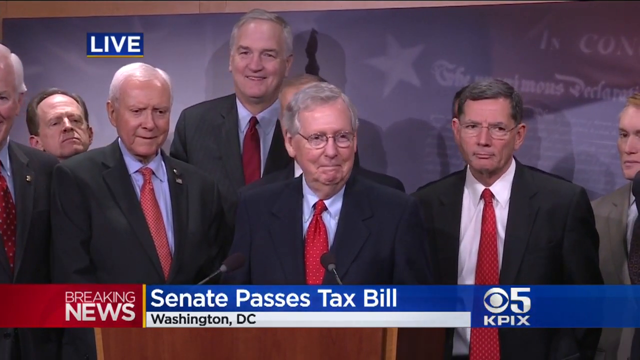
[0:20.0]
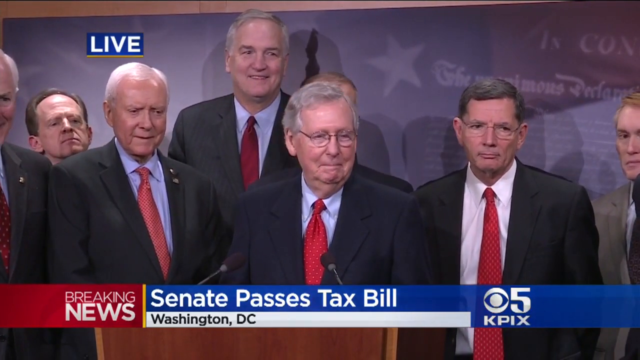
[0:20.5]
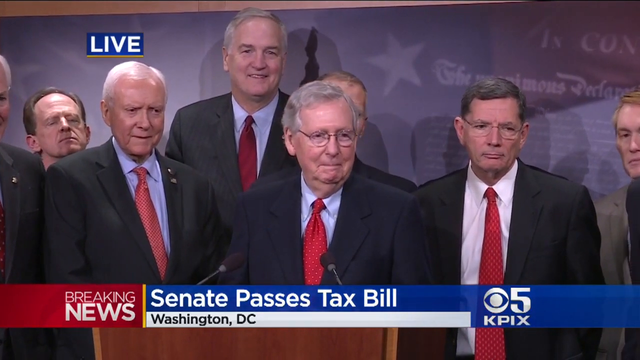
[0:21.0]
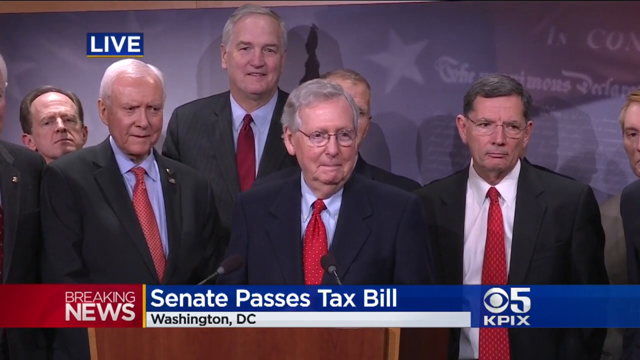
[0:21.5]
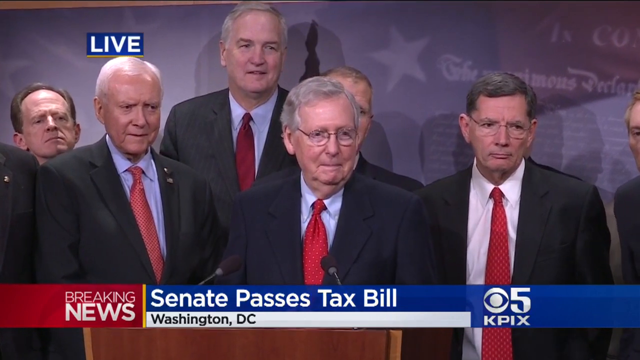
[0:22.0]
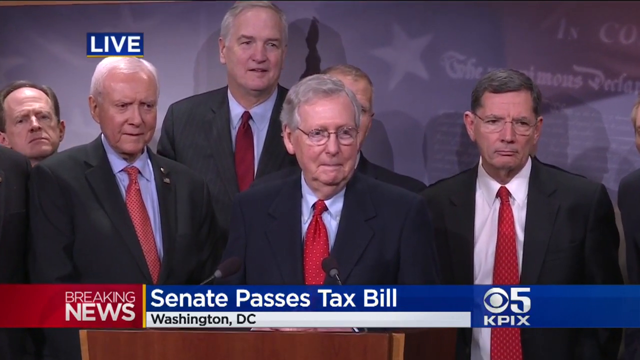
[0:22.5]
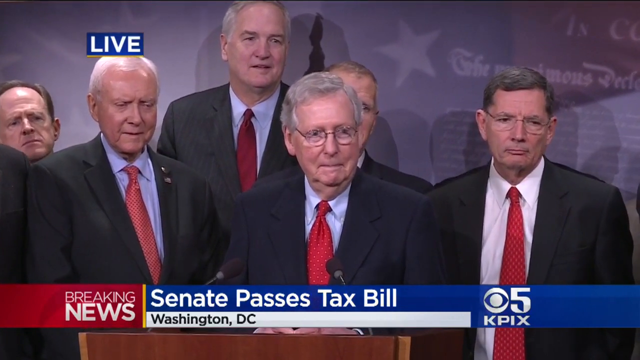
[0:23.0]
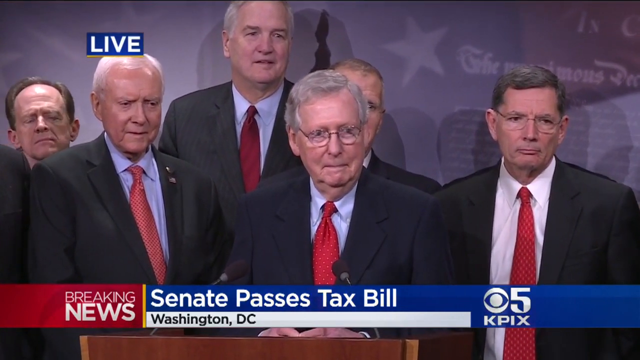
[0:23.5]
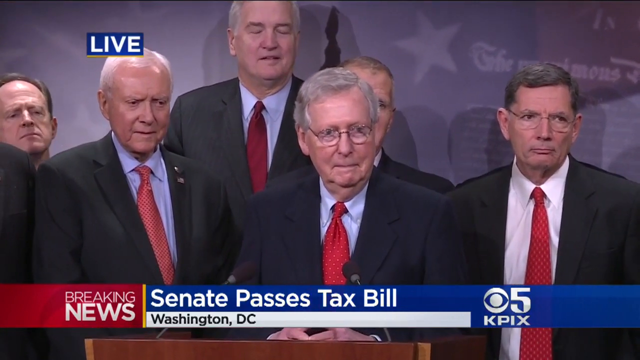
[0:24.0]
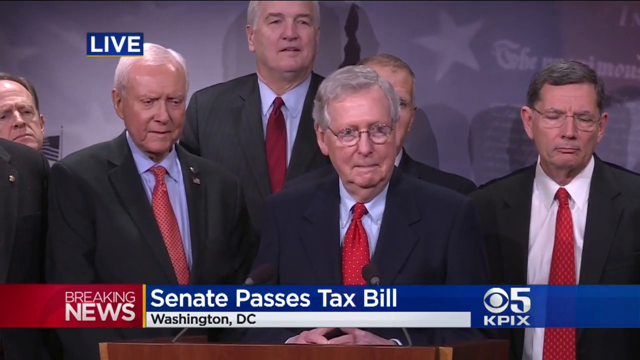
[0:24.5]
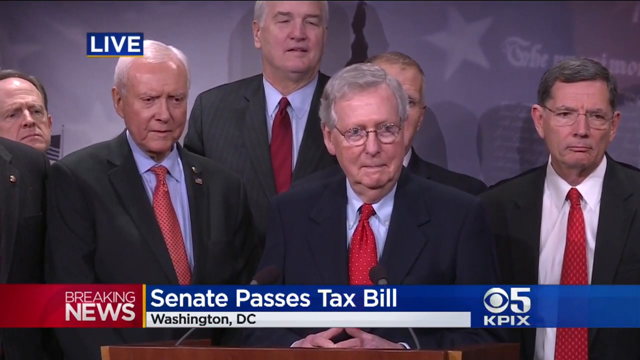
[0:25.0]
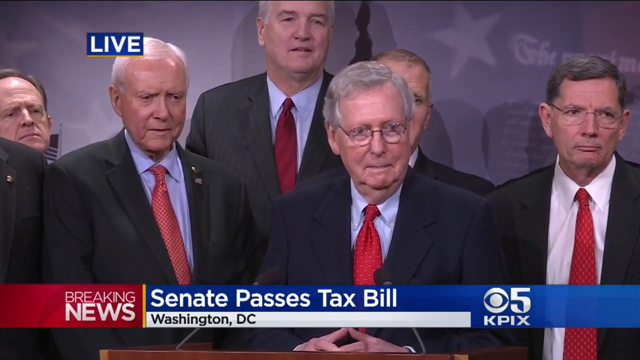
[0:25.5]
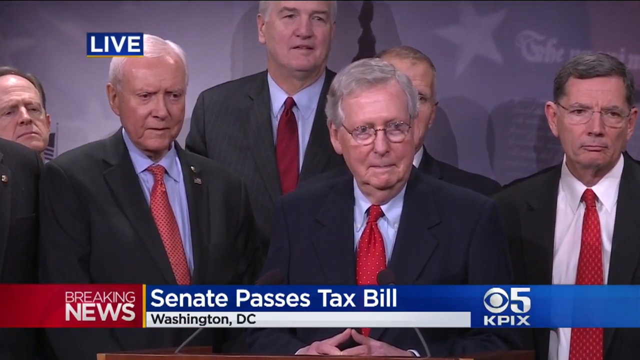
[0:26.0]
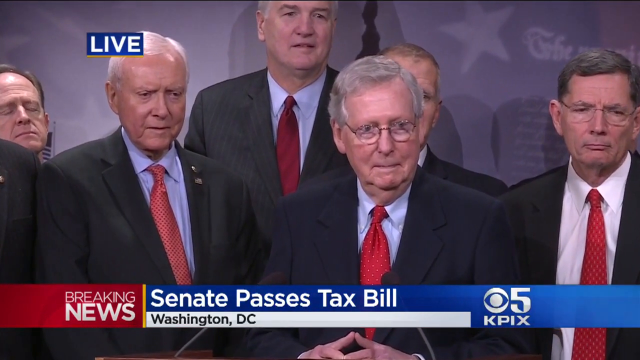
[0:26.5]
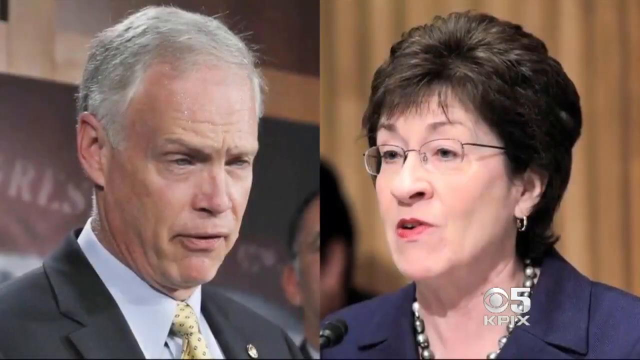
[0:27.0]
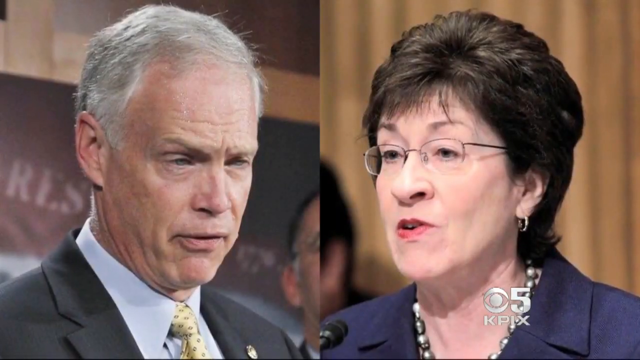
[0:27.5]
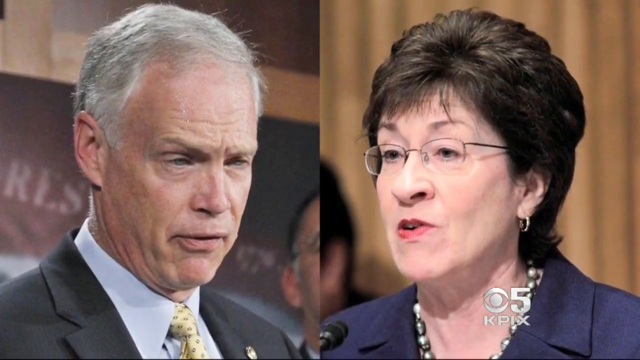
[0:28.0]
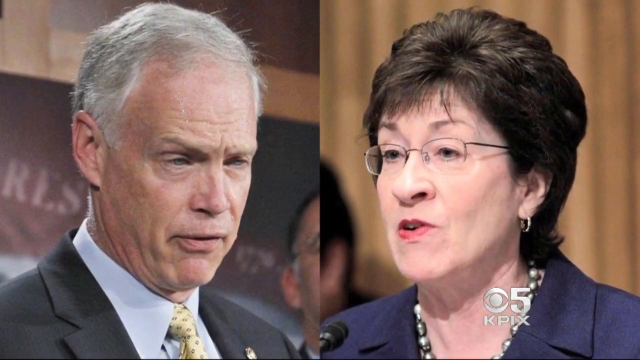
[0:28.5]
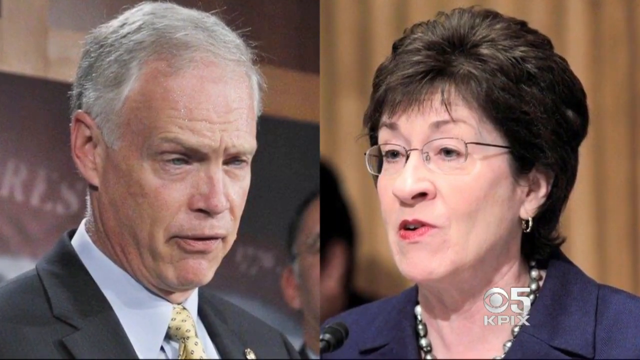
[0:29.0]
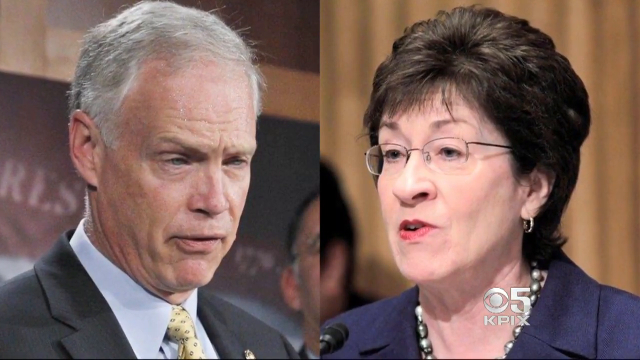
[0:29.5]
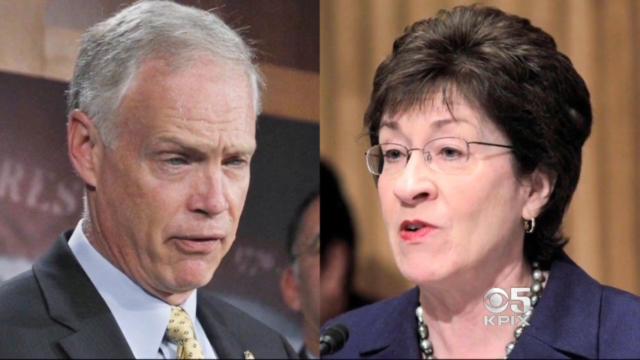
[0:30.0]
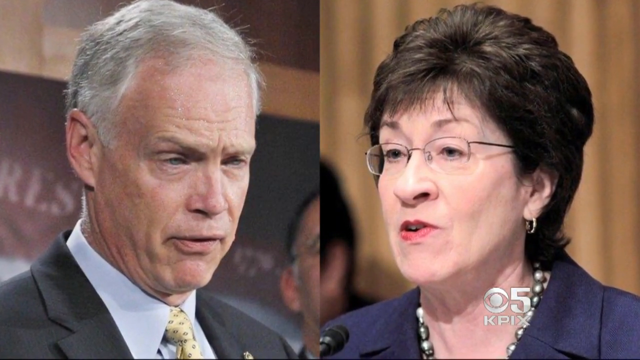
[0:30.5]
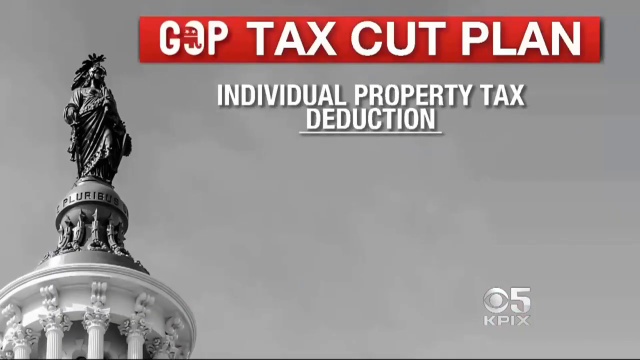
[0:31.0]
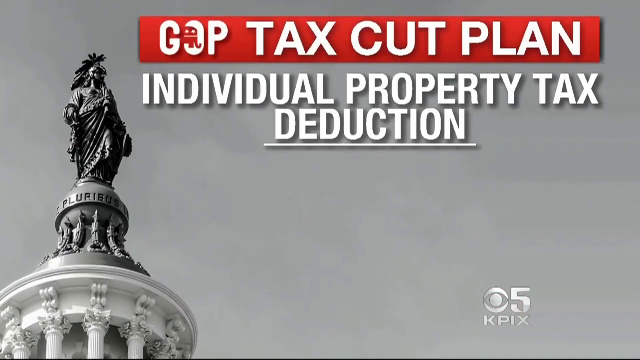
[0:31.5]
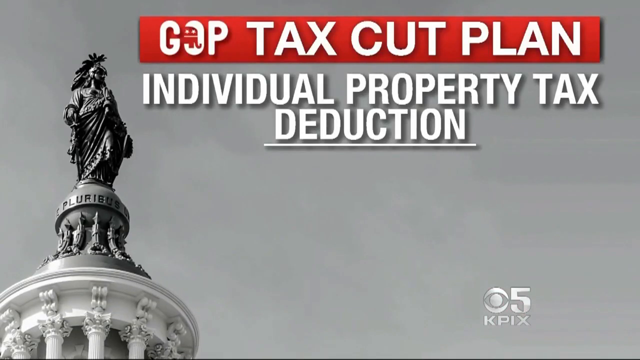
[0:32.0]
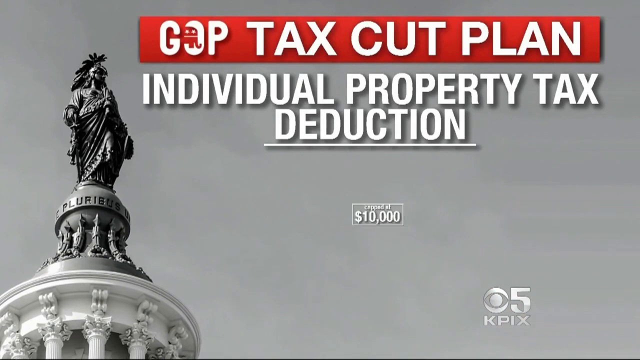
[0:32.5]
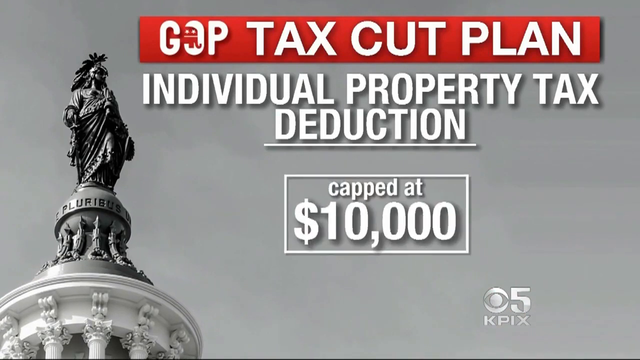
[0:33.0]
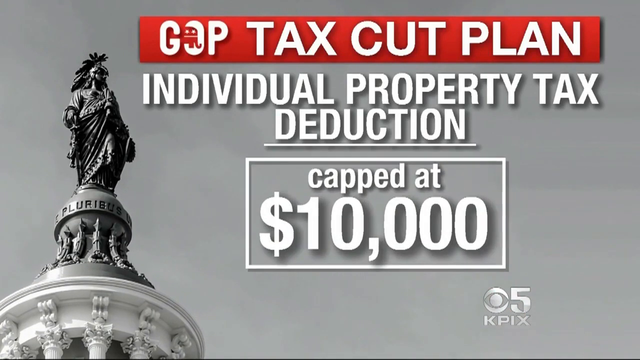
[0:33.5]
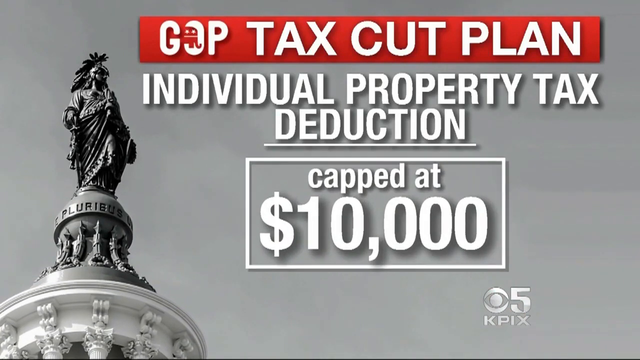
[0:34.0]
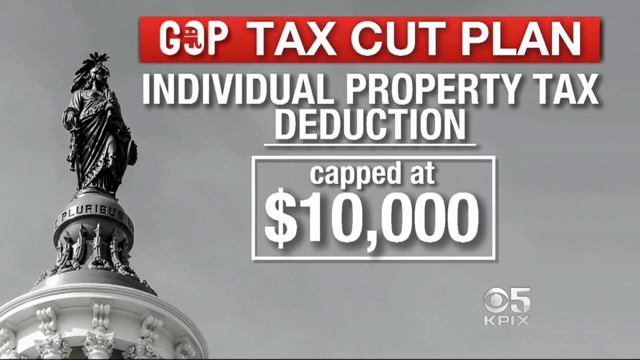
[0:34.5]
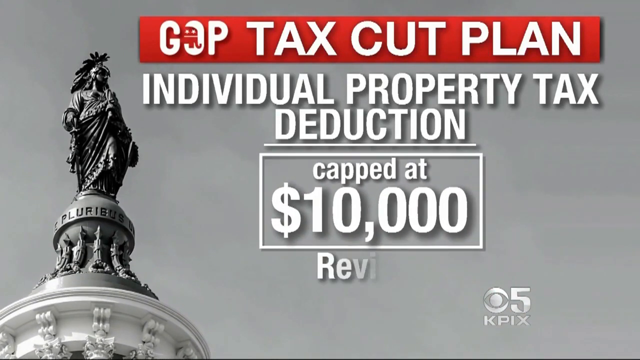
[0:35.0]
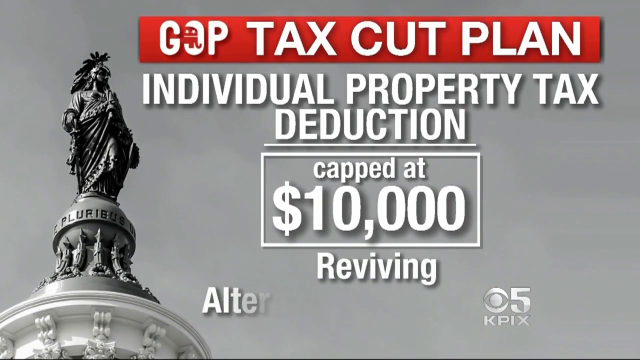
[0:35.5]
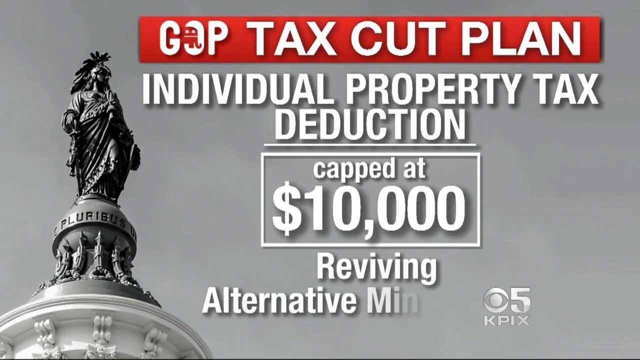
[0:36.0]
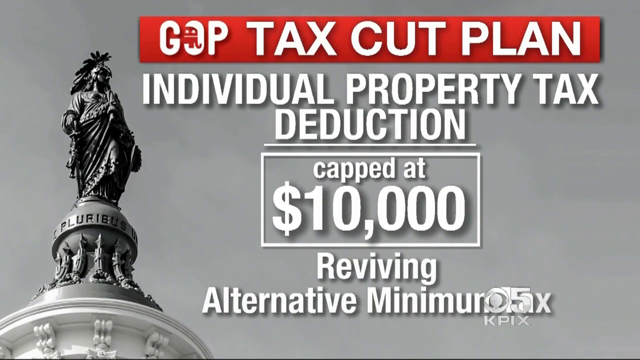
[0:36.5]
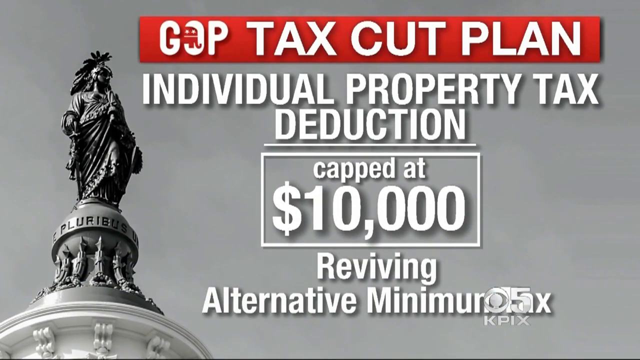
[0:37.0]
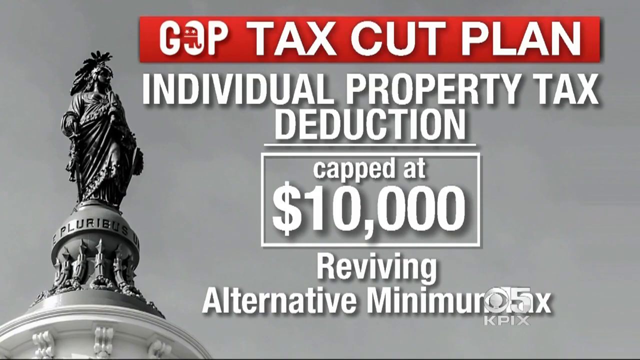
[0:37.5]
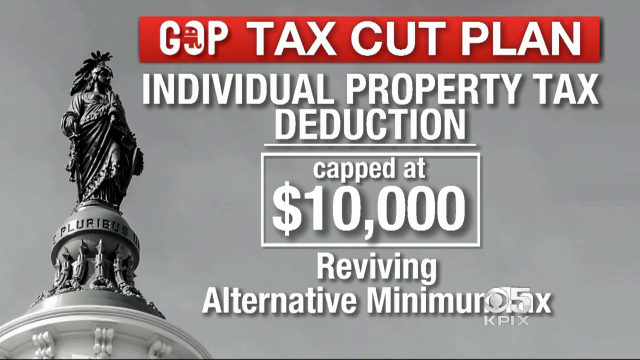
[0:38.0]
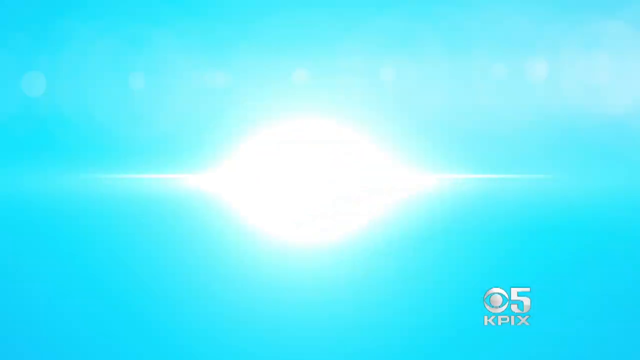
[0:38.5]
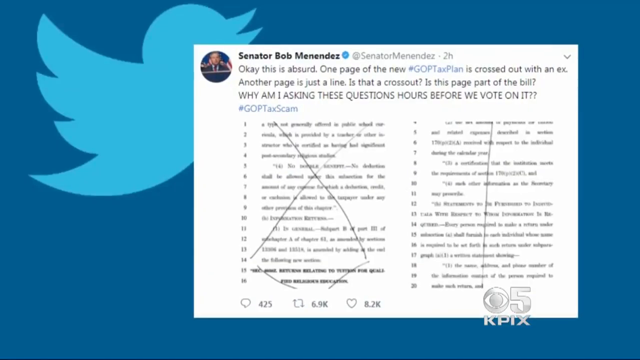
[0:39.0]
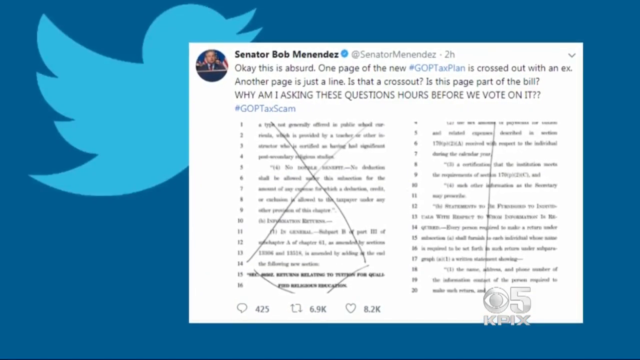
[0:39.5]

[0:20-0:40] Politicians talk in front of a background that shows the Constitution and its words in stars on the right side. In the lower left, "breaking news" appears in white font on a red background. In the middle, "Senate passes tax bill" appears in white on blue, and beneath it "Washington - DC" appears in black on white. Next to that are a CBS 5 sign and "KPIX", and "live" appears in the upper left corner. There are maybe two politicians. A woman on the right has short brown hair and glasses, and her collar looks navy blue, which is all that is visible of her top. On the other side of the screen, a man wears a black suit and a white collared shirt. Text then reads "GOP tax cut plan", "individual property tax deduction", "capped at $10,000" and "reviving alternative minimum". The video then briefly returns to the Senator Bob Menendez tweet shown earlier.